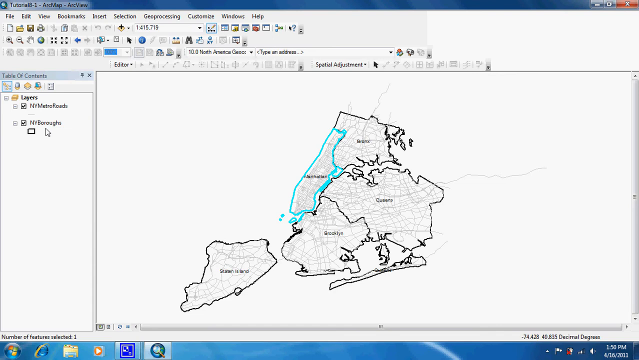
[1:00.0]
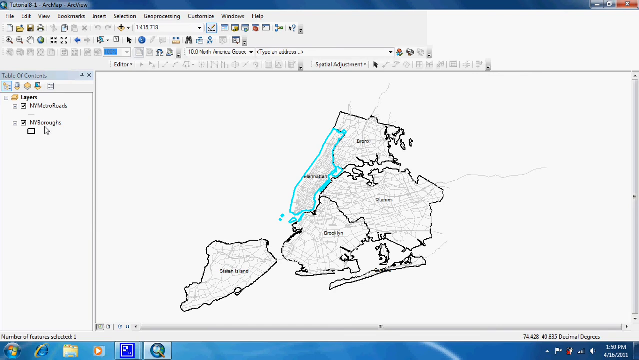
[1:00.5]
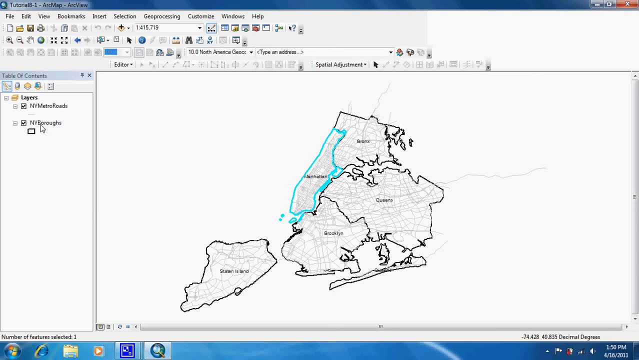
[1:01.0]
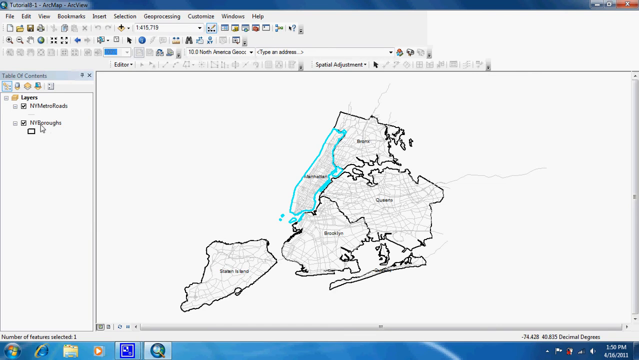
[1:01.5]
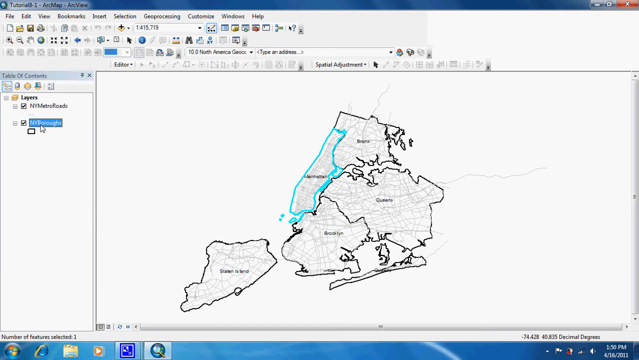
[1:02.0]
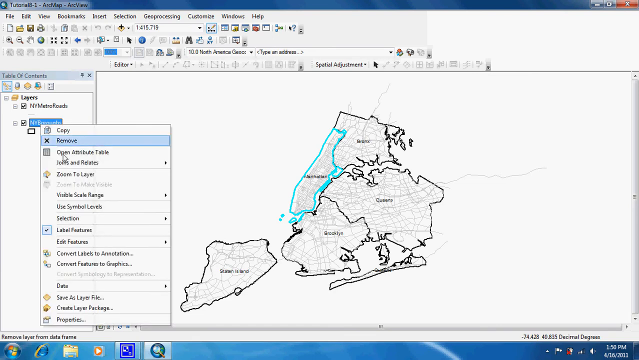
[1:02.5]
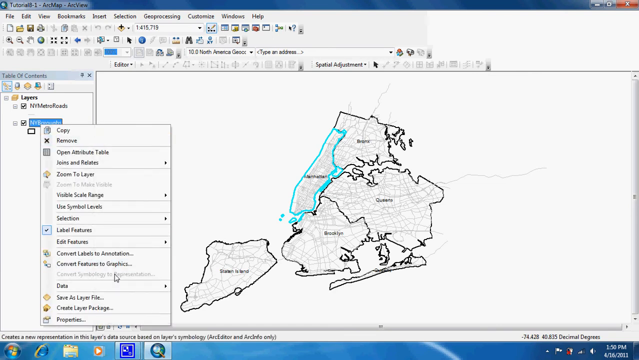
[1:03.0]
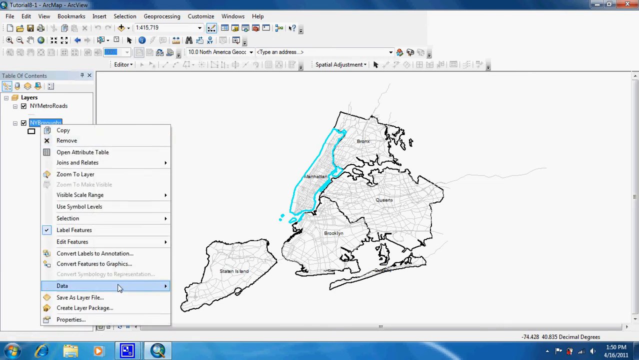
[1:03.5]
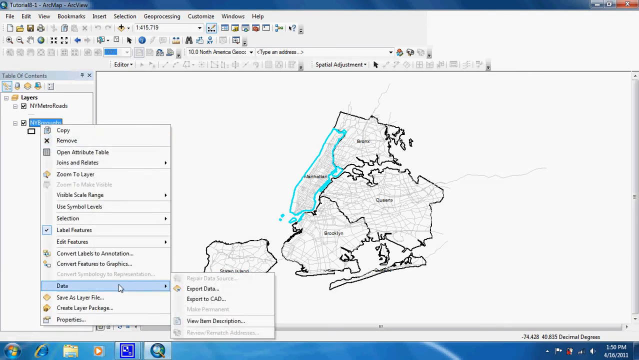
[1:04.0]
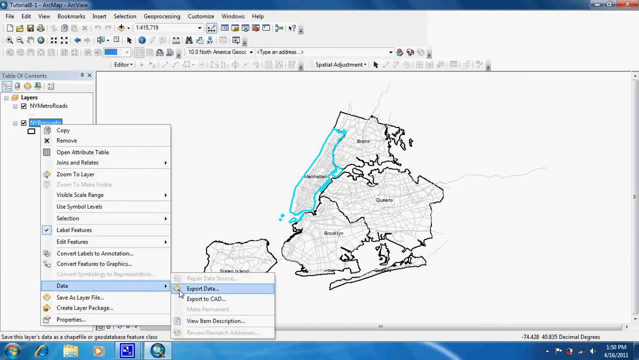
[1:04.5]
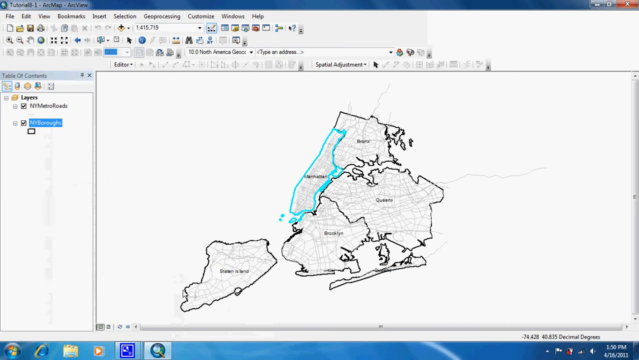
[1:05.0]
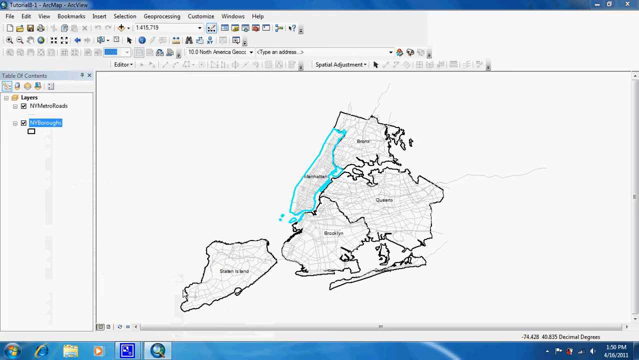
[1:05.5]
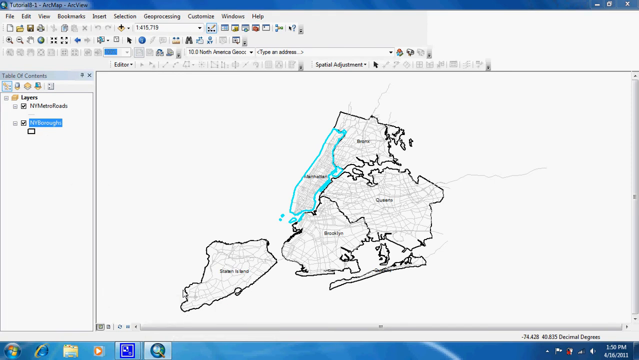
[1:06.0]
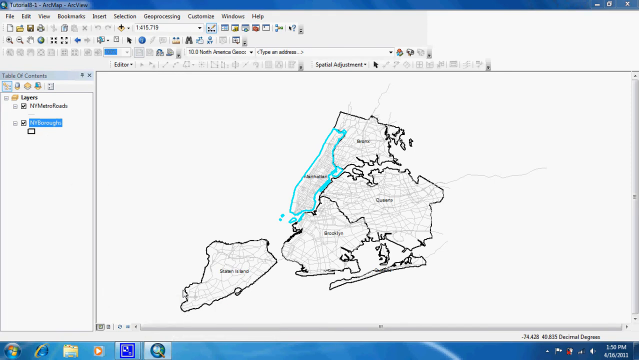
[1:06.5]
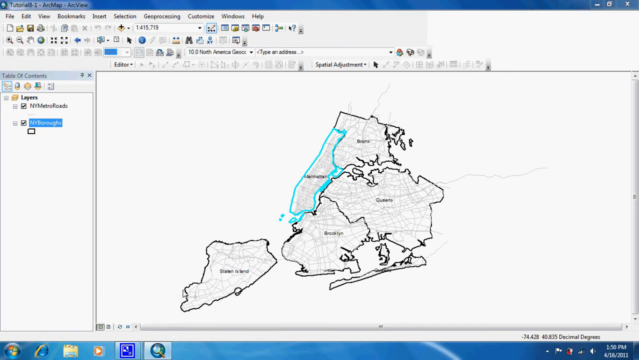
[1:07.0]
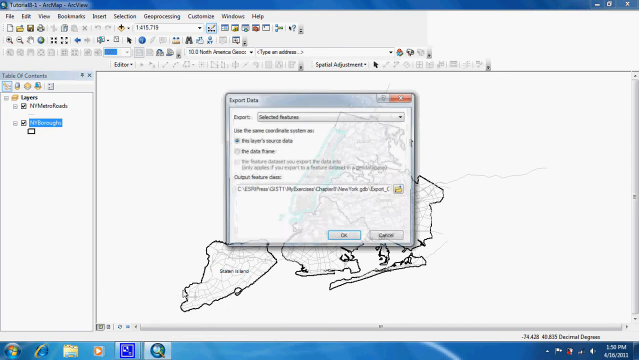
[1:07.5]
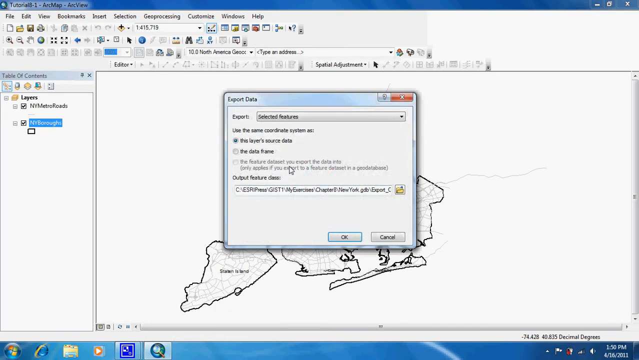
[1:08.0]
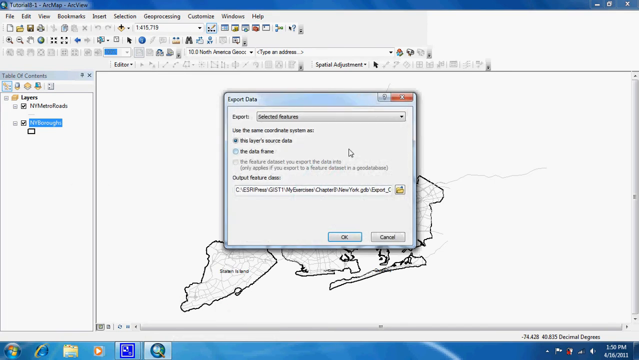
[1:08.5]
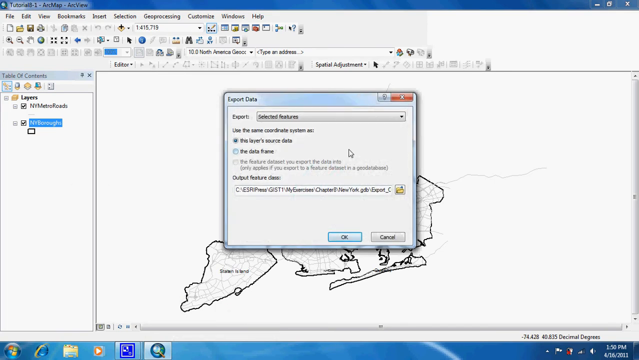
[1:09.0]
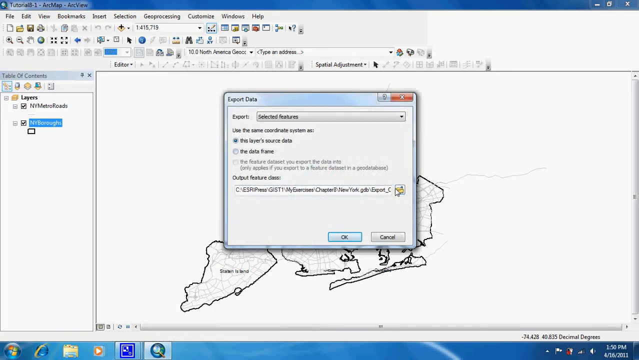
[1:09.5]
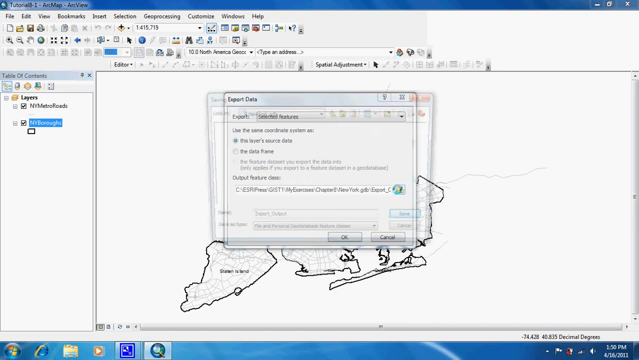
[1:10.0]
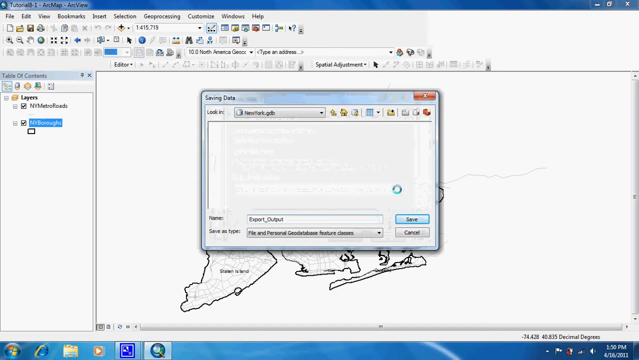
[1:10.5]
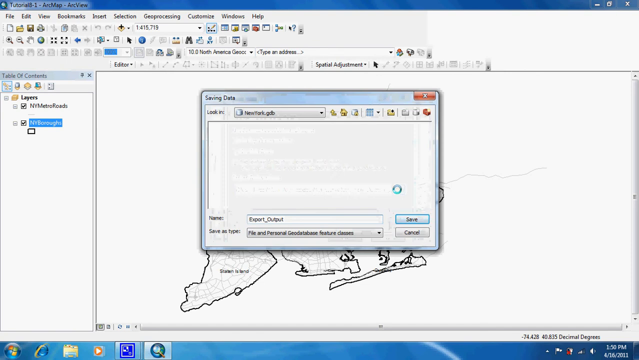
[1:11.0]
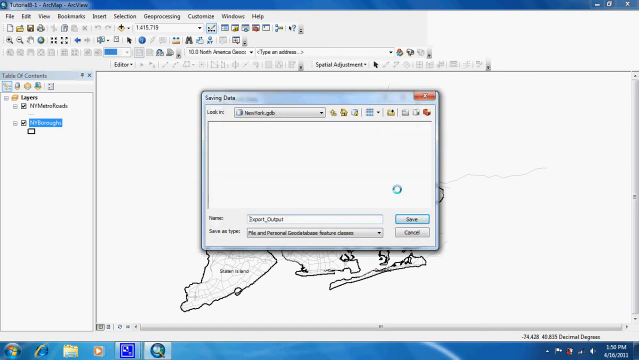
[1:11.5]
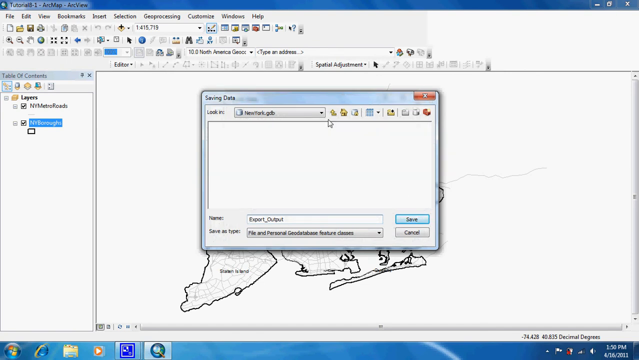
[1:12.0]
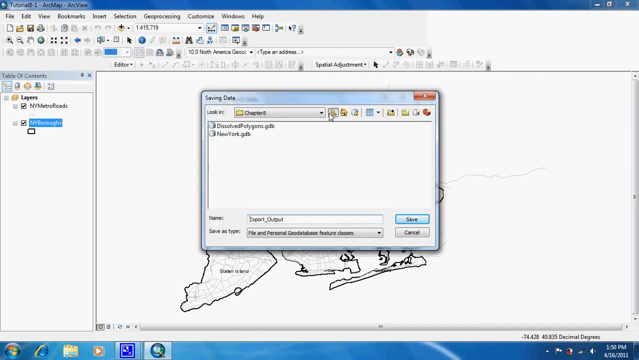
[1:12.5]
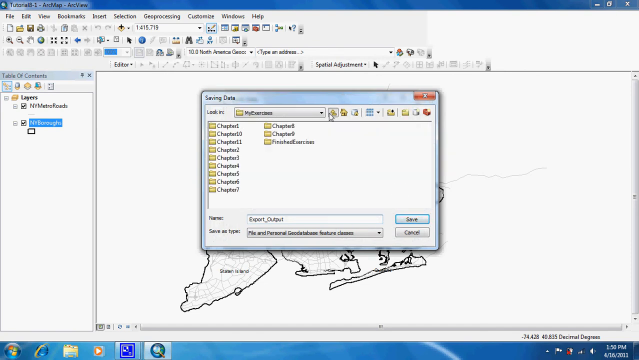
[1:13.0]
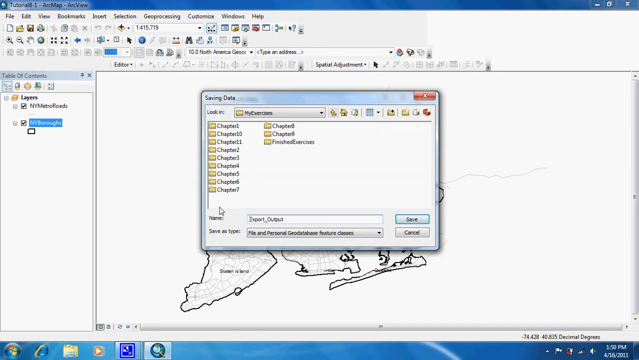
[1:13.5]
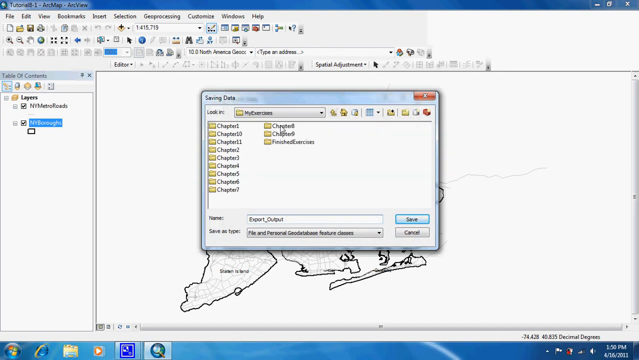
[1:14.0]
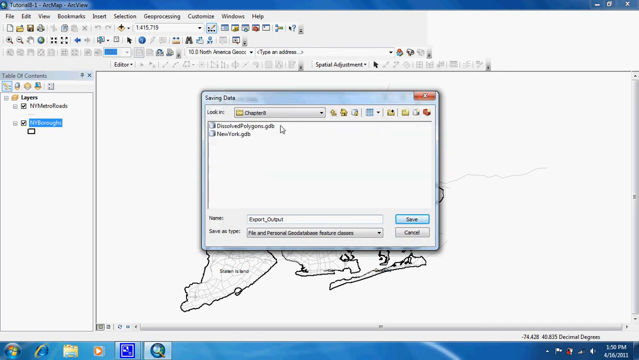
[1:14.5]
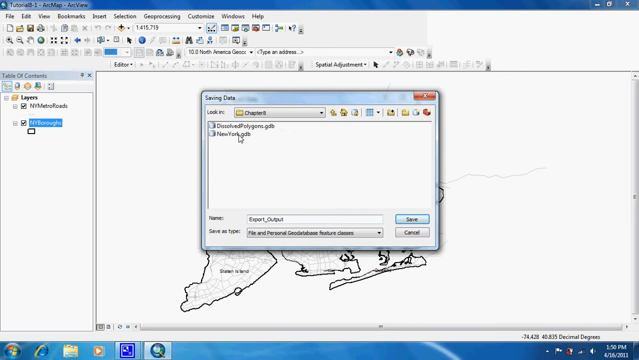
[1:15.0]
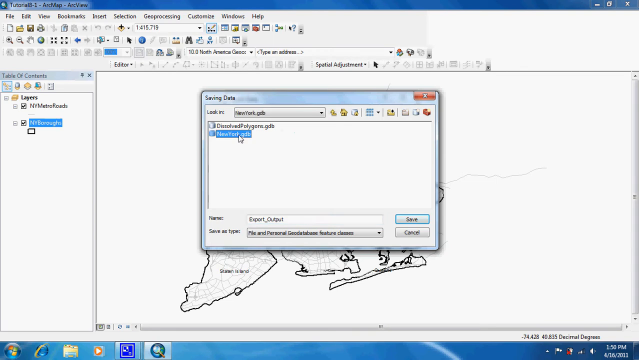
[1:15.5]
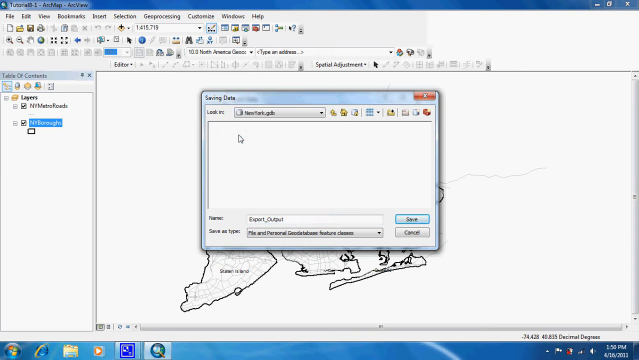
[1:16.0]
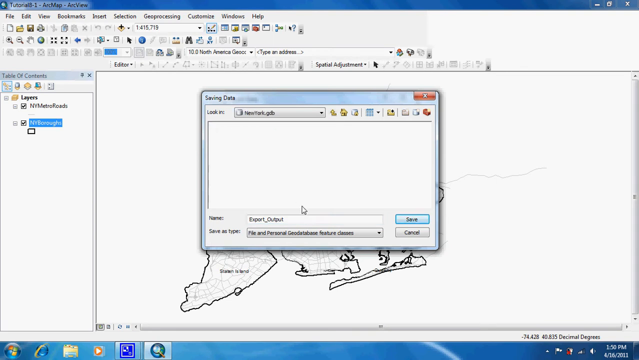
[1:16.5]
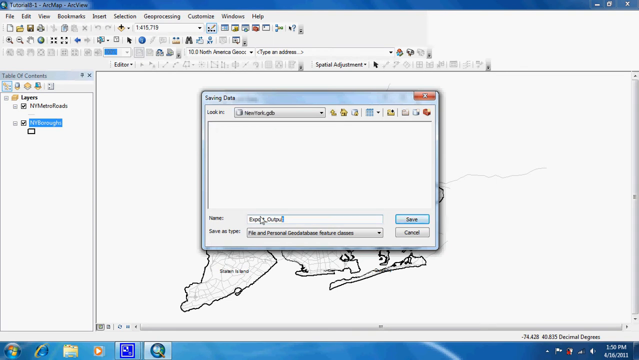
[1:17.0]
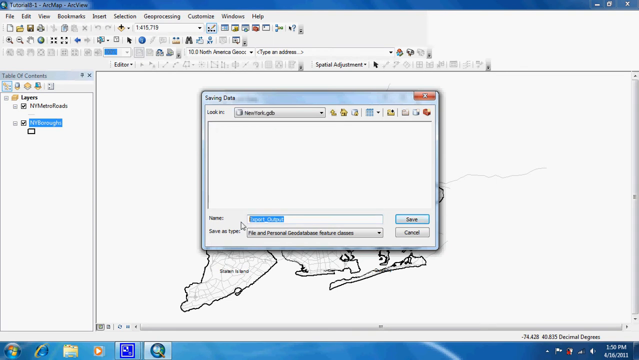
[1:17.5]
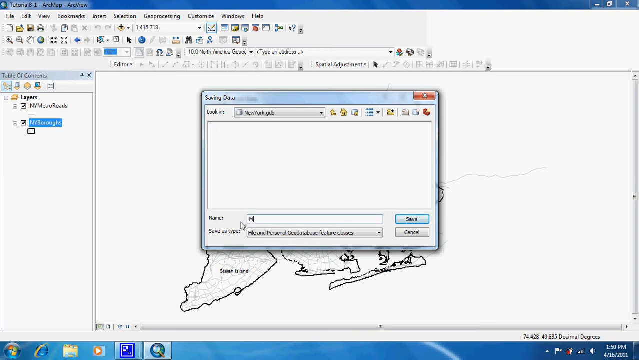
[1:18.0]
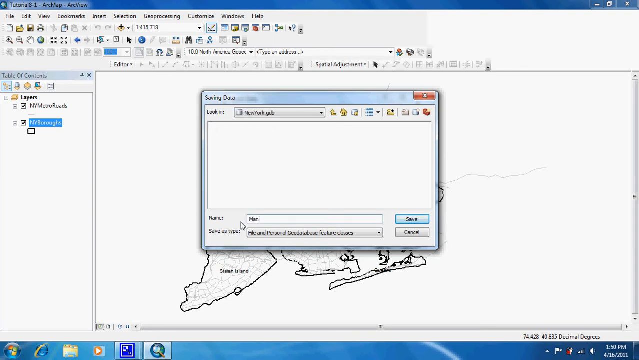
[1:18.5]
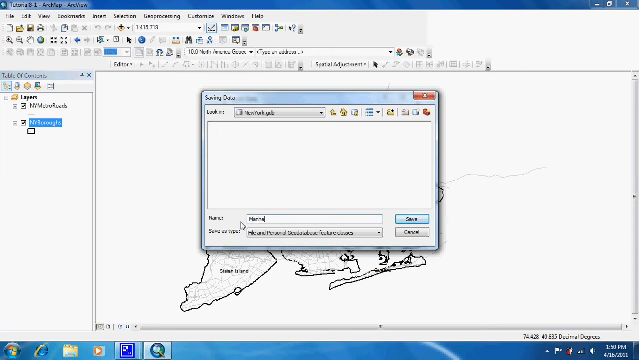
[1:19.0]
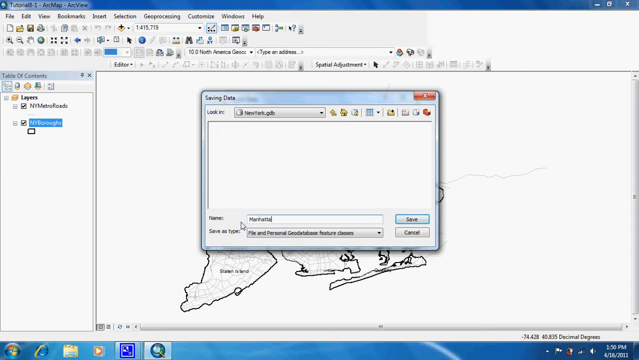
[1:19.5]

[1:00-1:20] The application's menu options across the top are file, edit, view, bookmarks, insert, selection, geoprocessing, customize, windows and help, with three rows of toolbars beneath them; standard icons such as new, open, save and print are among them, and the second and third rows contain some unique icons. In the left pane, New York boroughs is selected and a menu pops up, from which data and then export data apparently get selected. An export data window opens with an export dropdown field and some radio buttons. Data apparently gets saved: a folder is chosen, the file is renamed, apparently to Manhattan, and it is saved.